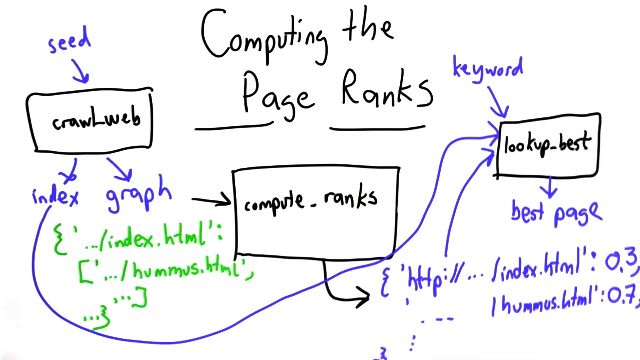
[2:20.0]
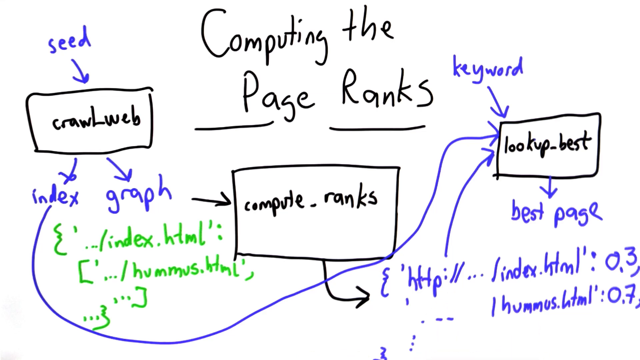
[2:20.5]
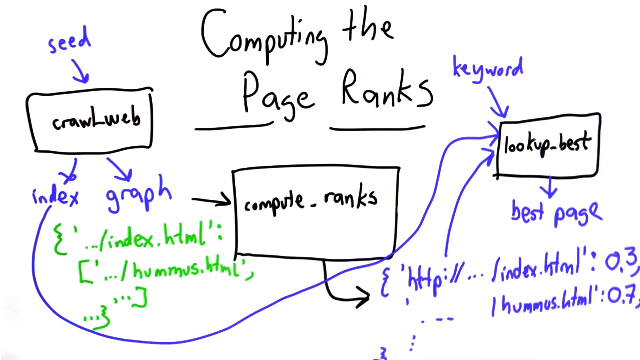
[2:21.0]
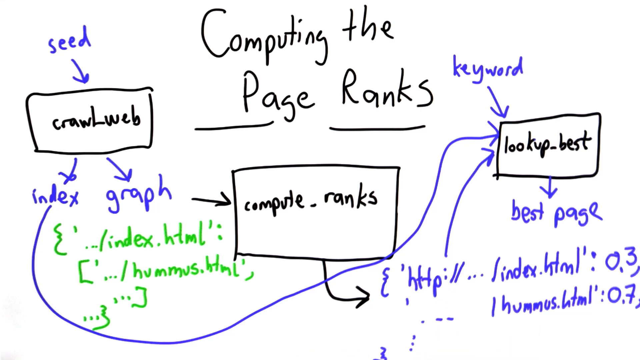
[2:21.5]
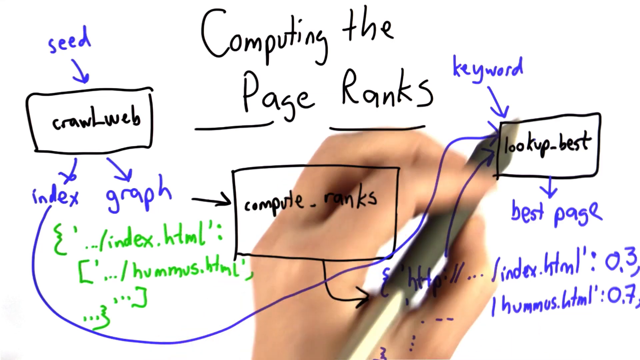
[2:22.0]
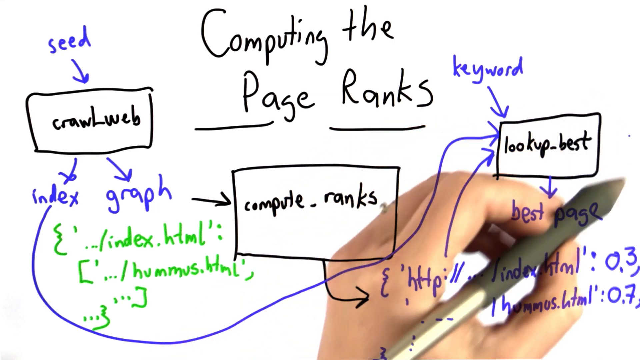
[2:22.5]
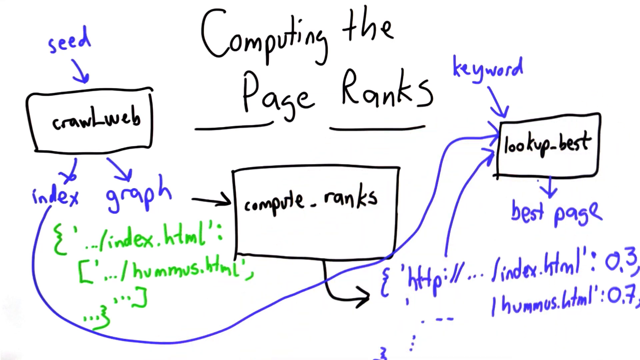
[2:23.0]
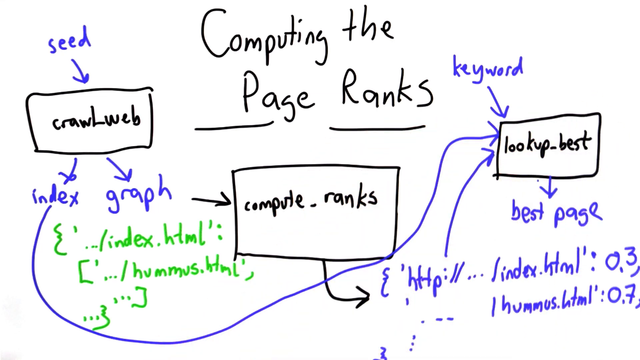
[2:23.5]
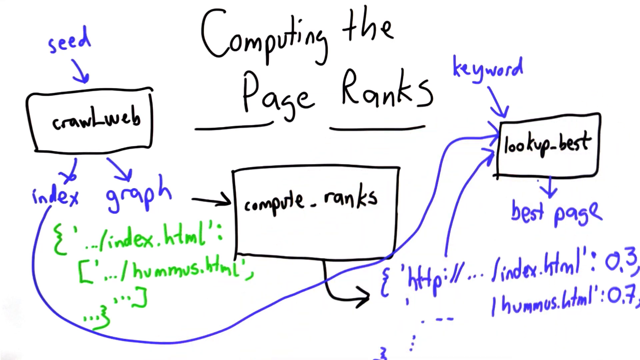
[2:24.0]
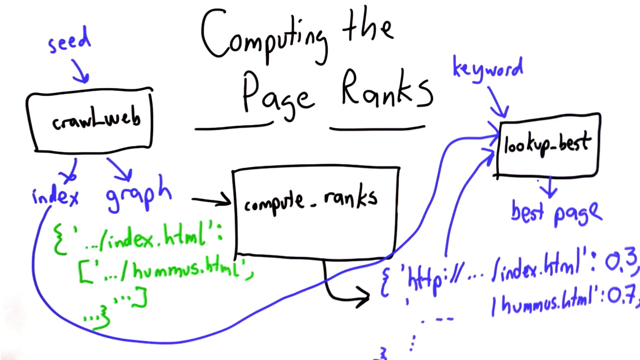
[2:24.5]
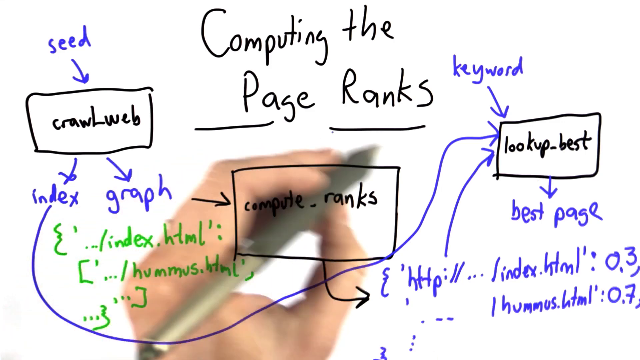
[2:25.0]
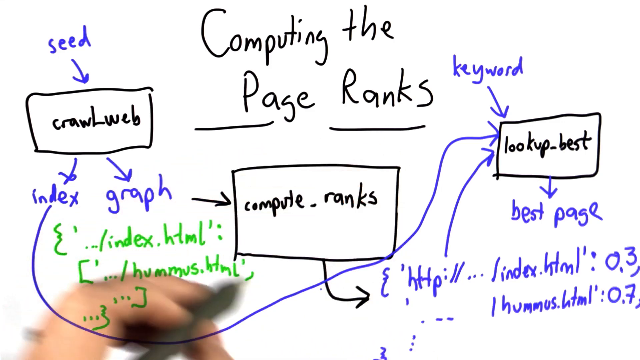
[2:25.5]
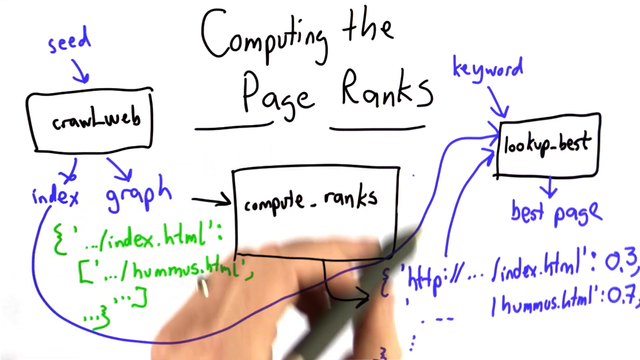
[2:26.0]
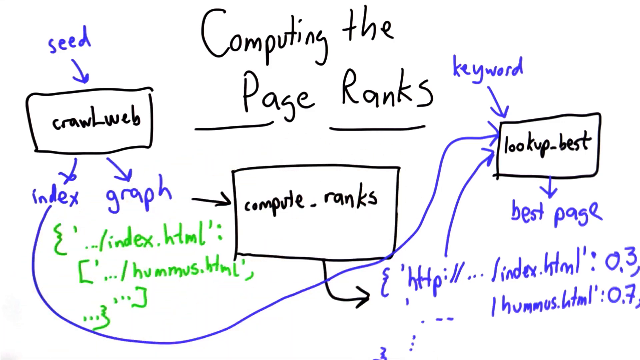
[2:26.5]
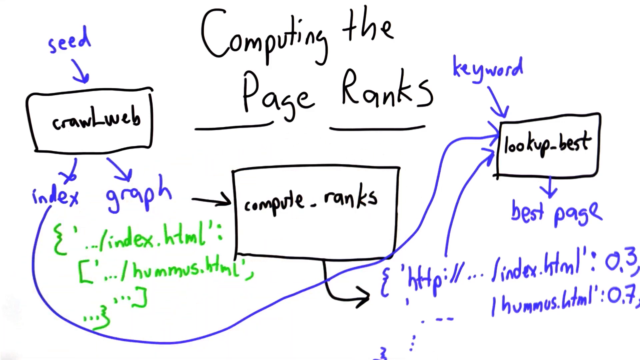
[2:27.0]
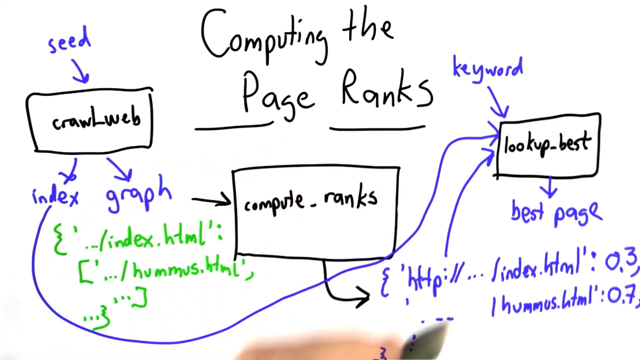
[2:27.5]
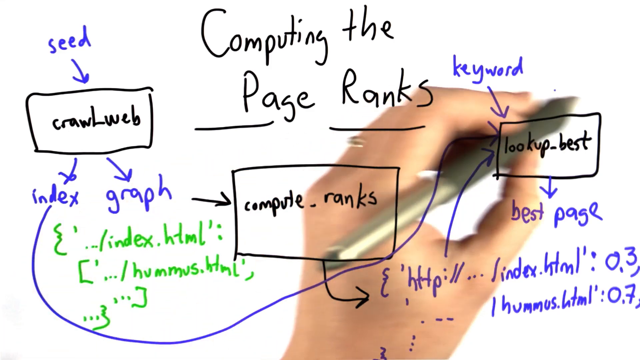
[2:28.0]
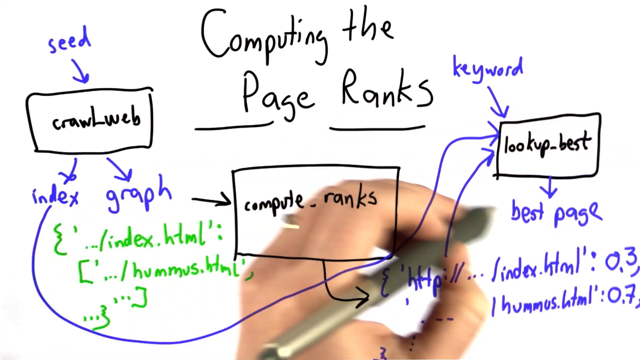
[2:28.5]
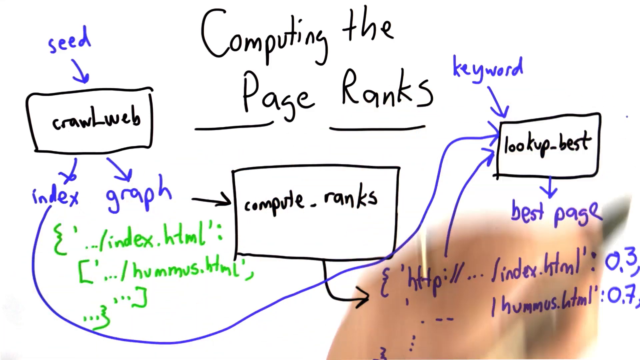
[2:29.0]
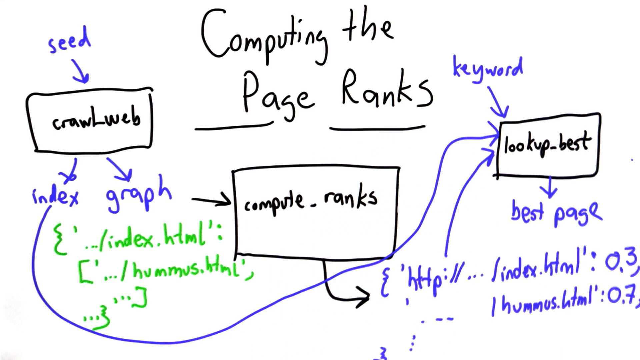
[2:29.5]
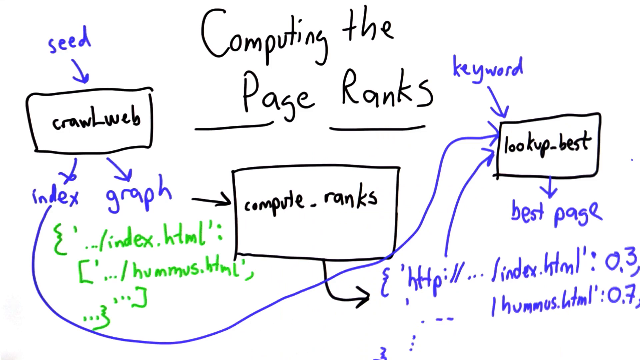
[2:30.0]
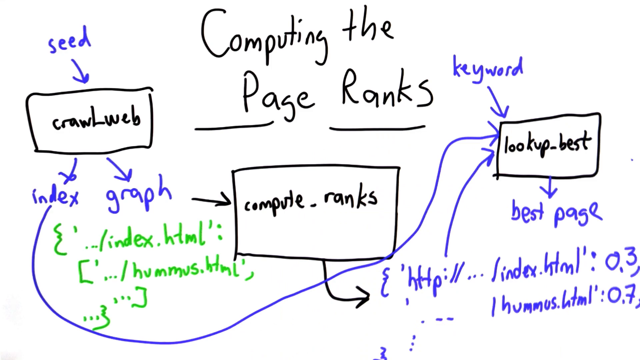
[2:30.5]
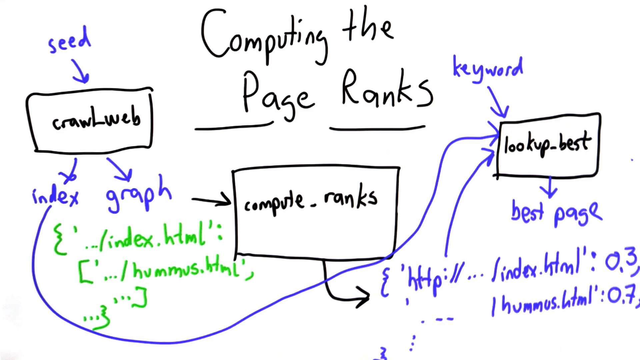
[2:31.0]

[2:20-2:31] The end of lookup best, leading to the best page, is highlighted. The person giving the class focuses on the two results at the end, circling the words and showing the path from Compute Ranks to lookup best. The whole flow is traced from the seed on the left, through the index and the graph, to Compute Ranks in the middle, and using the keyword to reach the best page on the right.